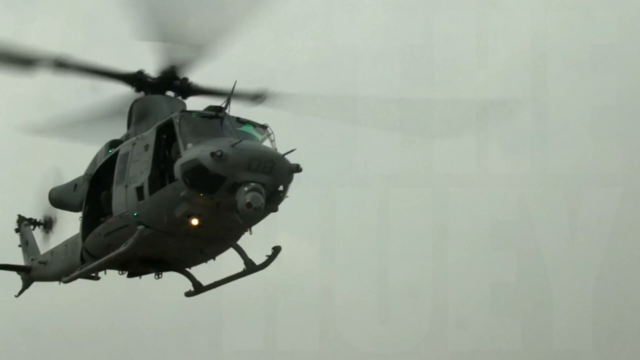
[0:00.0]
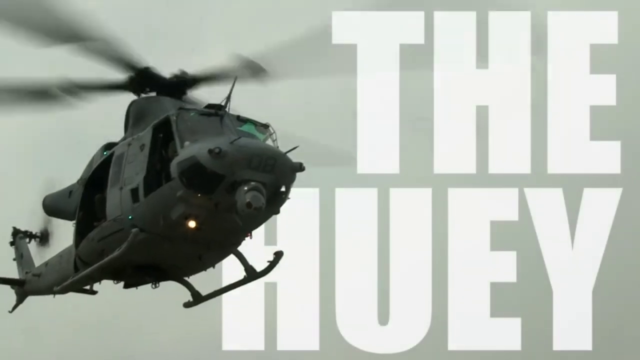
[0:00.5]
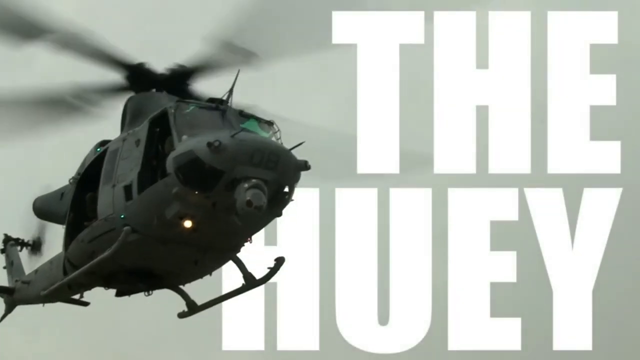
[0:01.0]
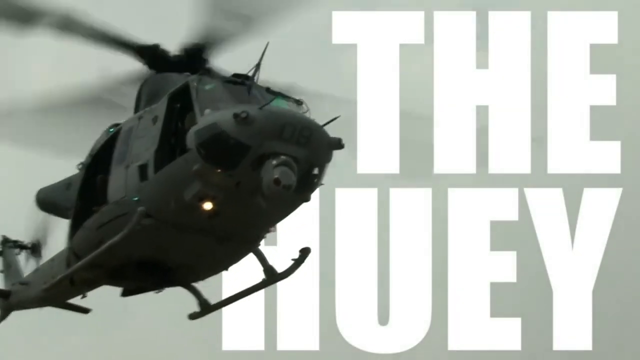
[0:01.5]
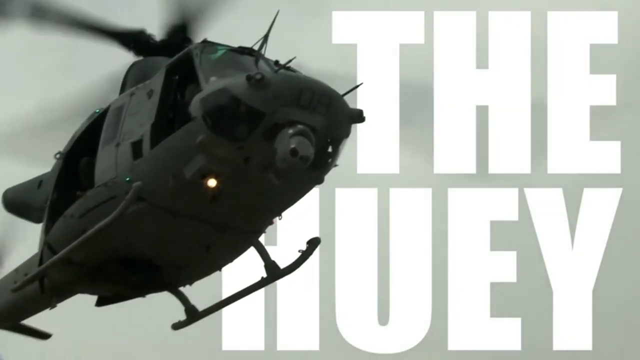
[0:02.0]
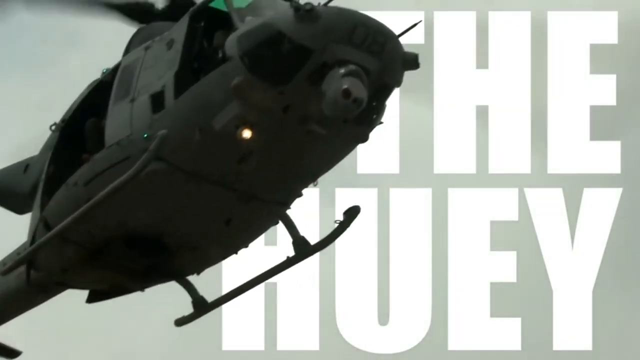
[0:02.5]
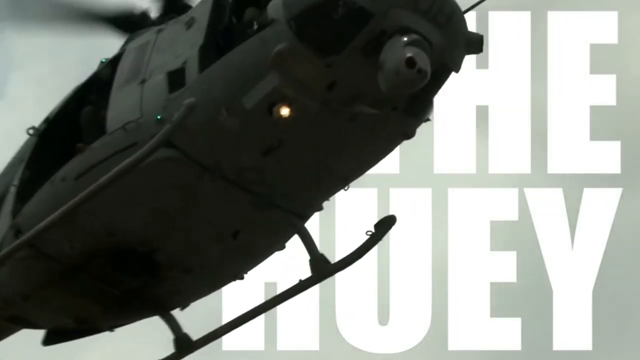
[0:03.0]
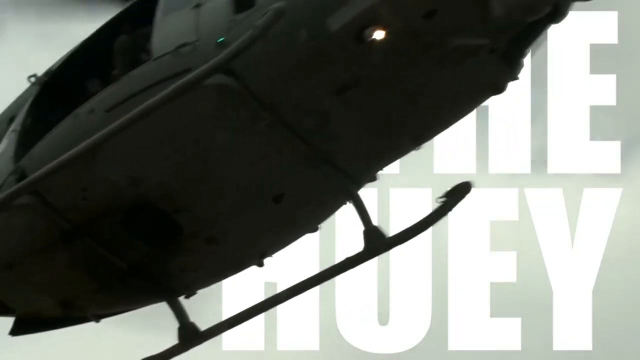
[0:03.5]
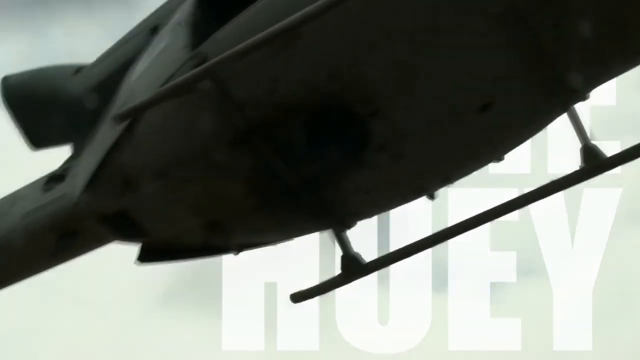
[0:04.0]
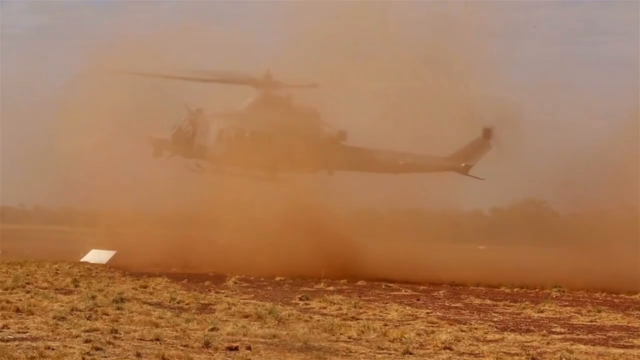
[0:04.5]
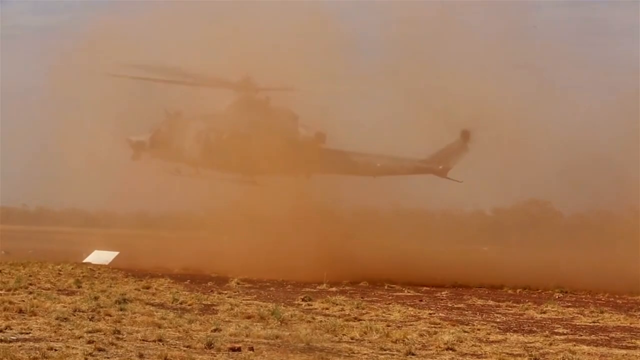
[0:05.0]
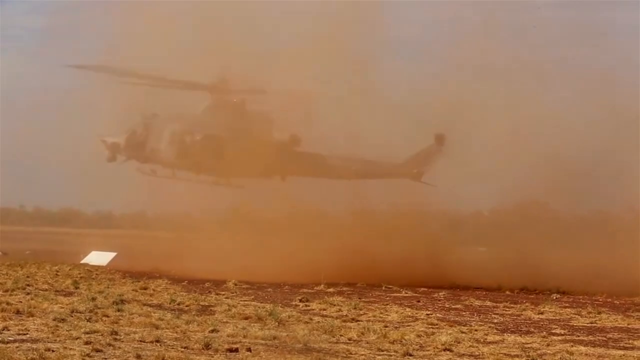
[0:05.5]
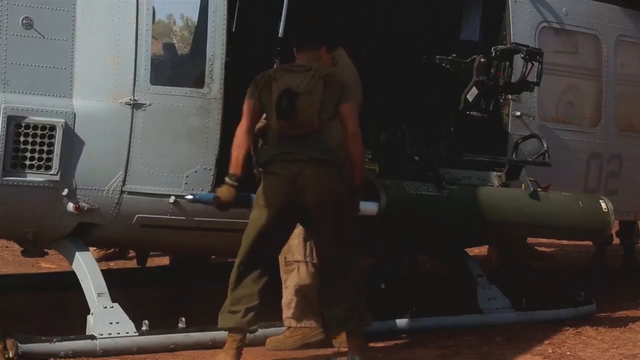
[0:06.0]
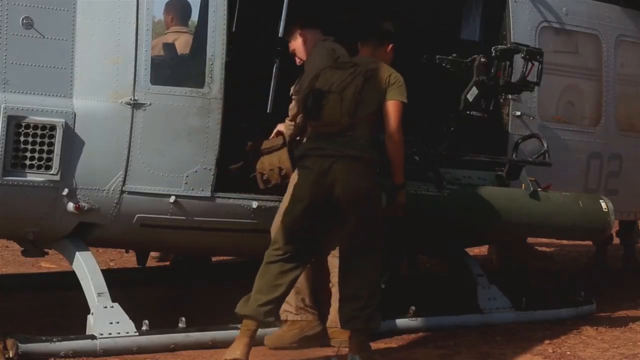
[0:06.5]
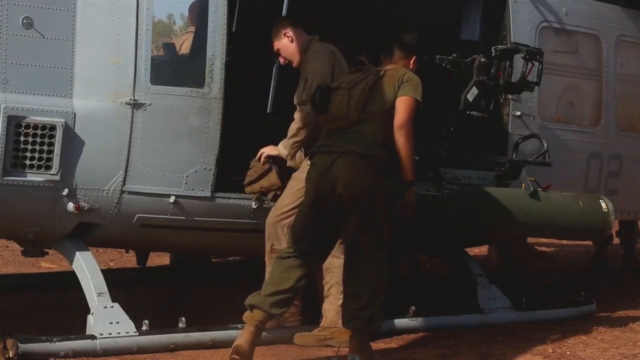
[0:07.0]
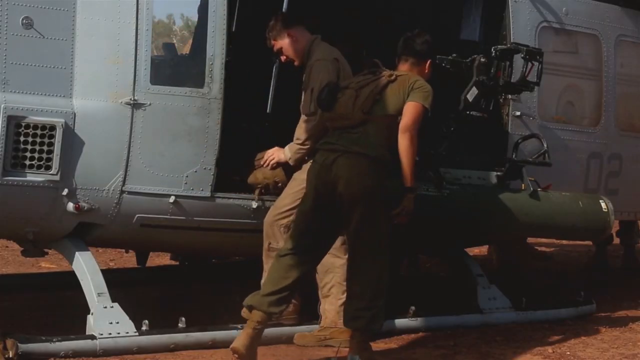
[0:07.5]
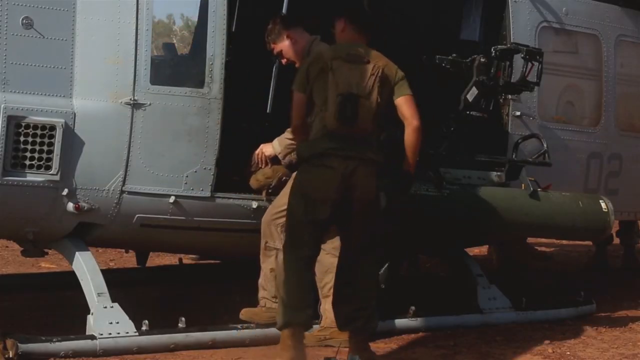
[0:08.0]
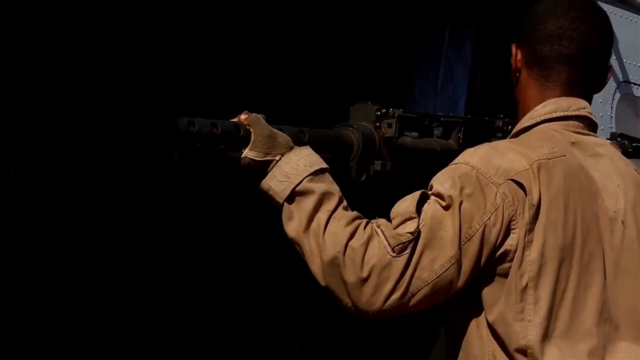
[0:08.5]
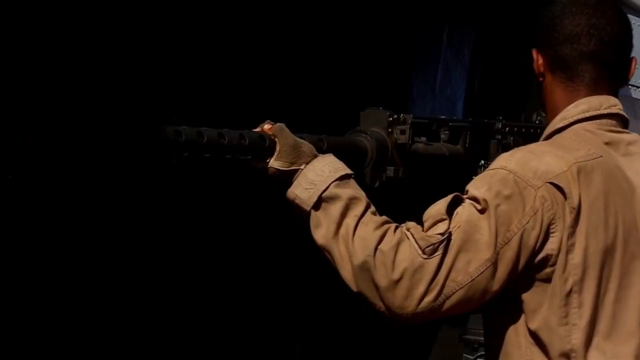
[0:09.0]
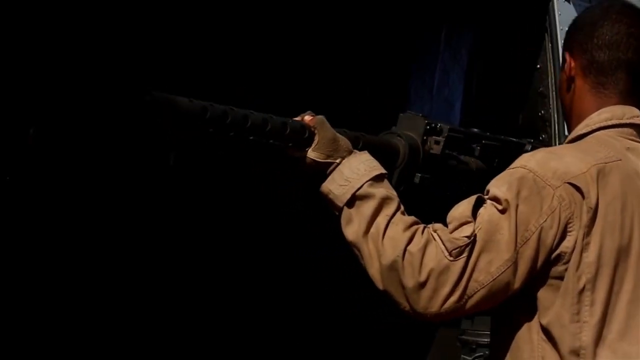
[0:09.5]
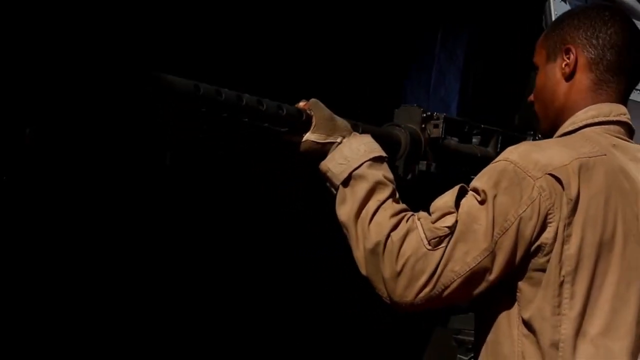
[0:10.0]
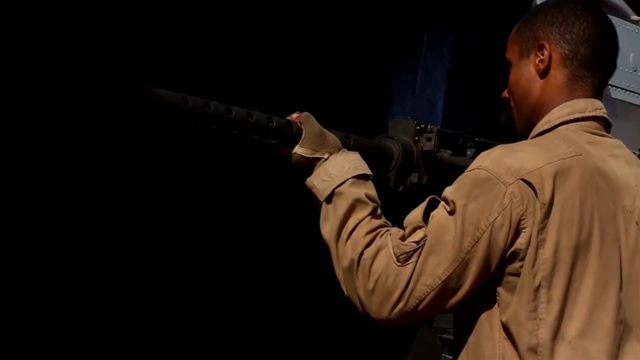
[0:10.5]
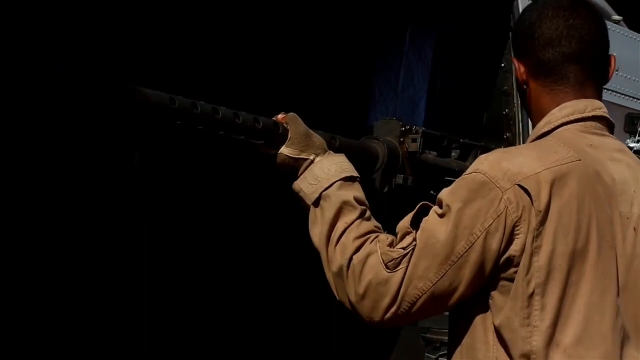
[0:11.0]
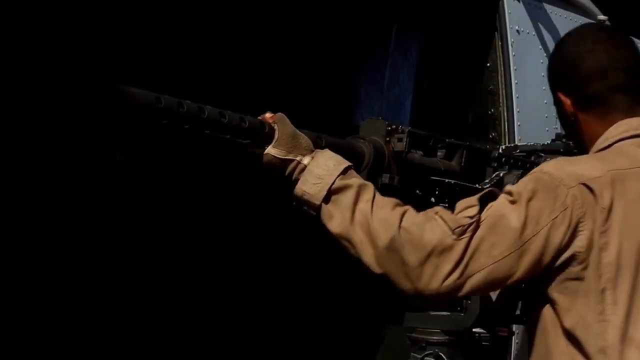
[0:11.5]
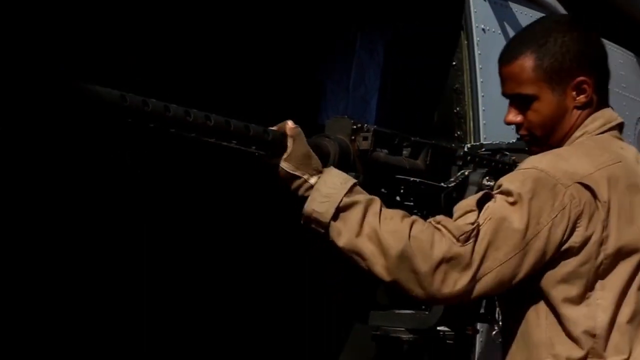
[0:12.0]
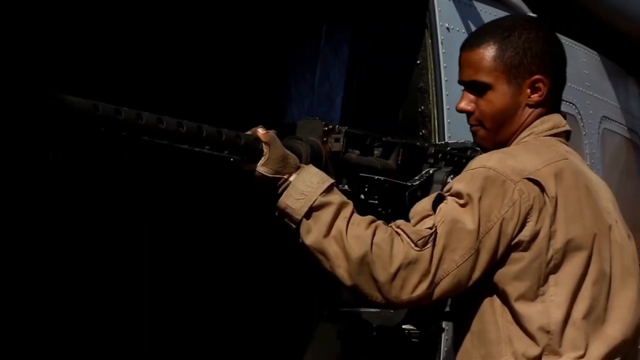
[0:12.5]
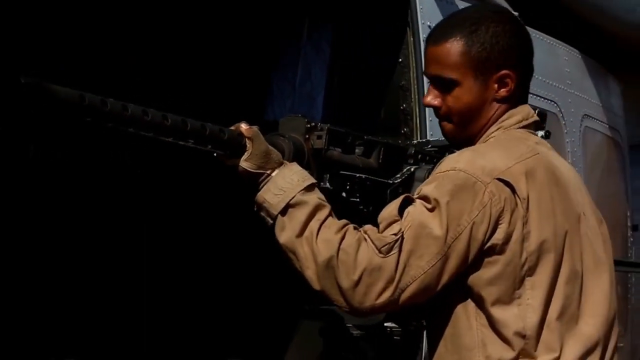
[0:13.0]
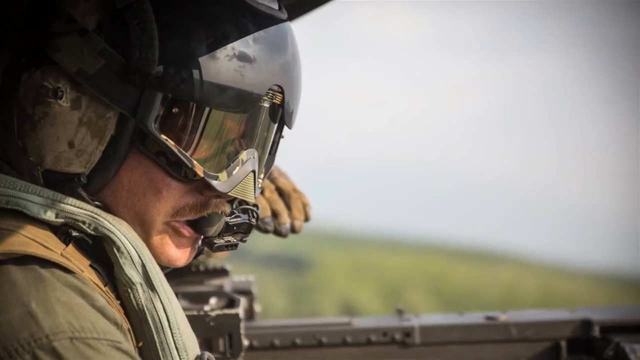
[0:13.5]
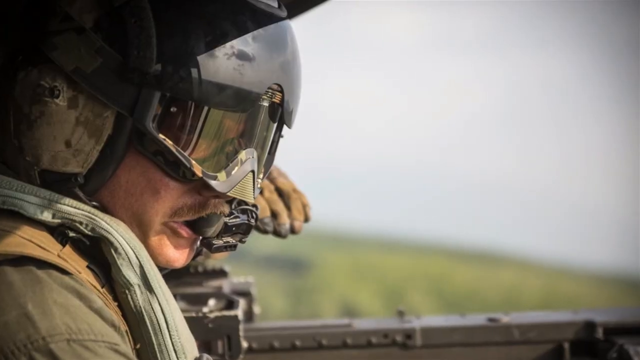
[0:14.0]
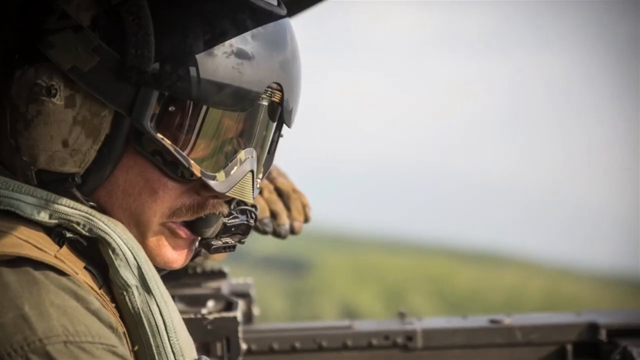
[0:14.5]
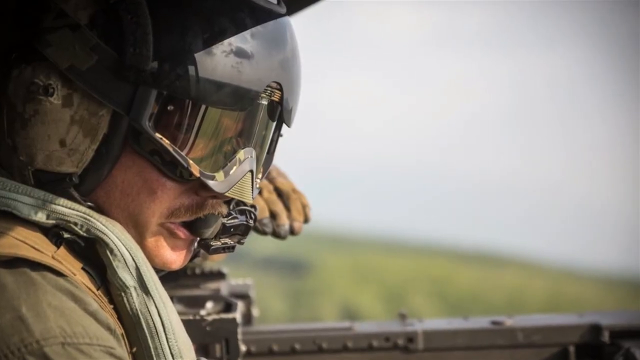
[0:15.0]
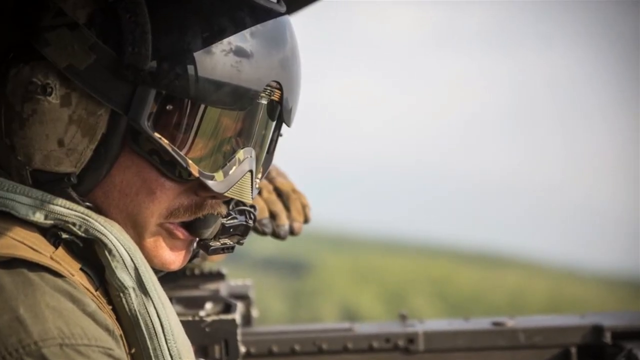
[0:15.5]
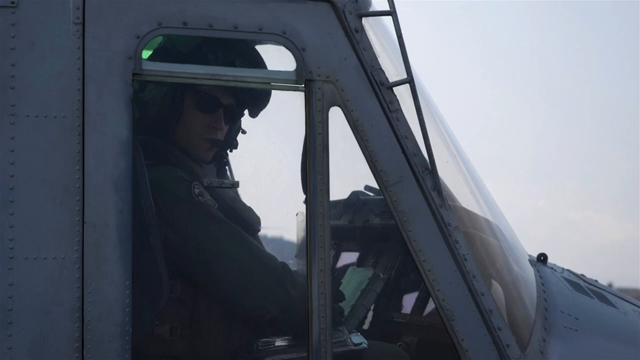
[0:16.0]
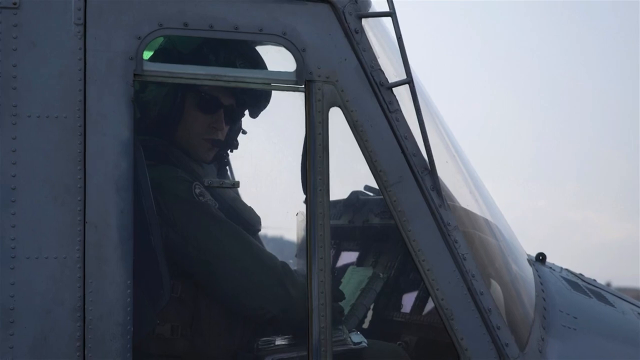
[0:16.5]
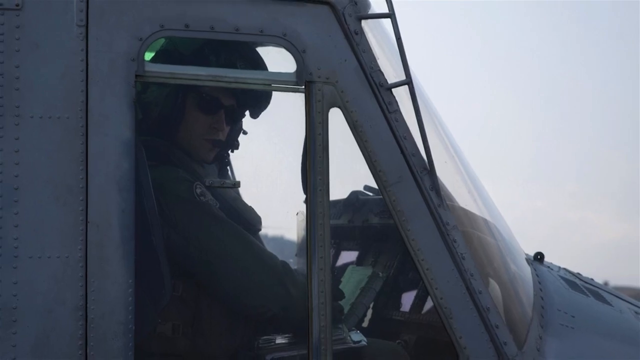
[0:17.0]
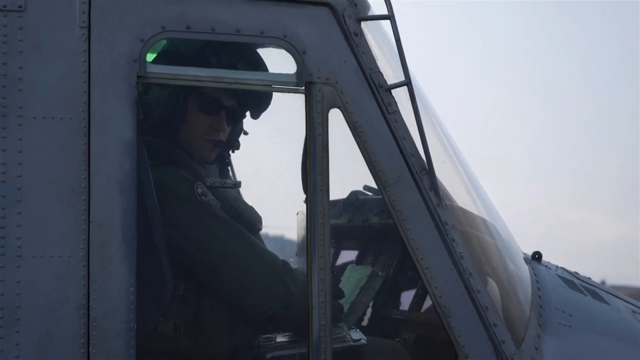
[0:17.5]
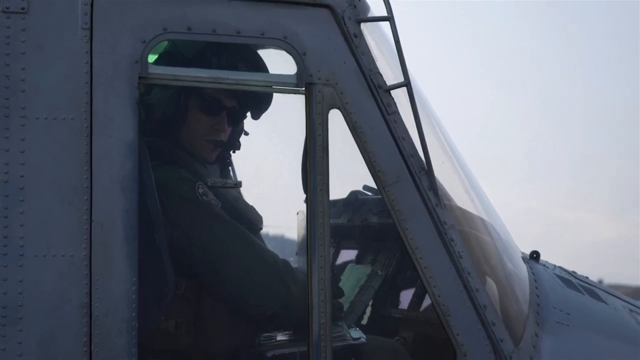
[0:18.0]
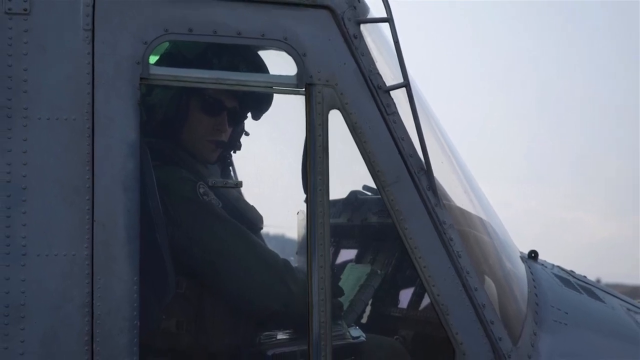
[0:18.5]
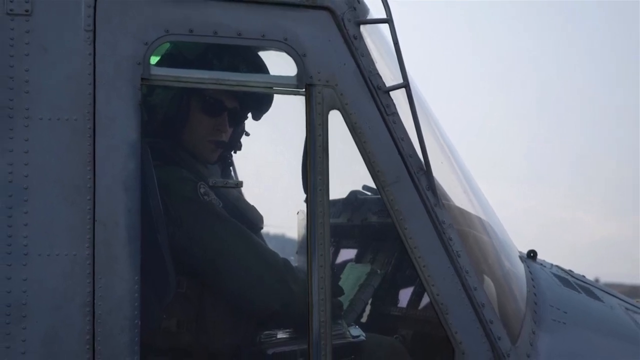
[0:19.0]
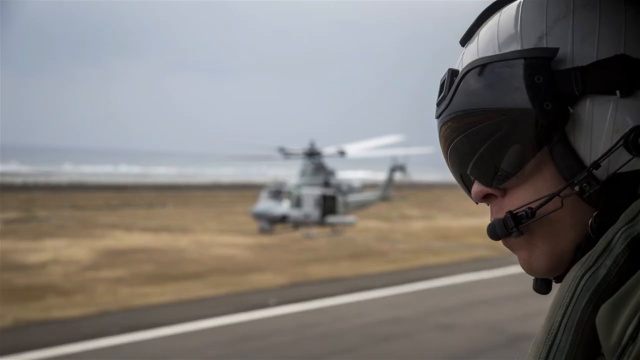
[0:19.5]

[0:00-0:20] The video starts with an attack helicopter and the words "the Huey" in a large white font. The Huey helicopter is landing, kicking up dust everywhere. Two soldiers, apparently marines or perhaps army, load weapons, 60 caliber machine guns, onto the sides of the Huey, apparently along with ammunition. There are pictures of the pilots wearing headsets and specialized helmets for flying. The video cuts abruptly to soldiers loading missiles. It stops on a still of the Huey helicopter in midair with a camera up front to locate targets, and the blades appear to be spinning. The video seems to be a demonstration of the Huey attack helicopter's capabilities in combat.